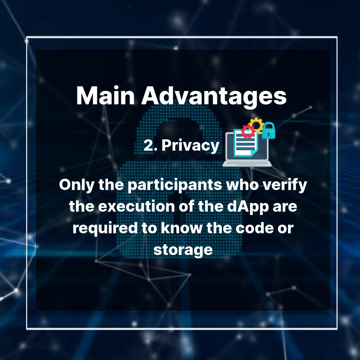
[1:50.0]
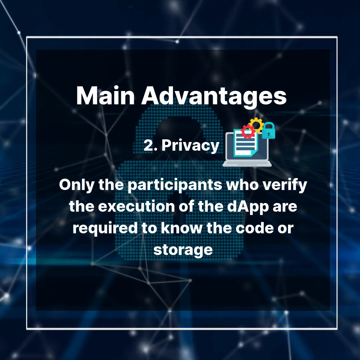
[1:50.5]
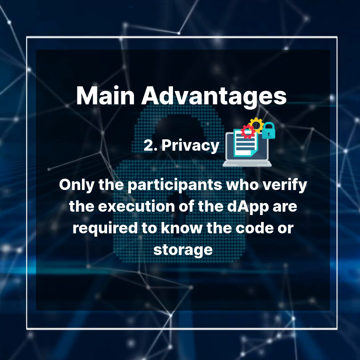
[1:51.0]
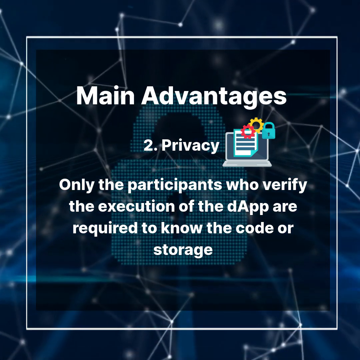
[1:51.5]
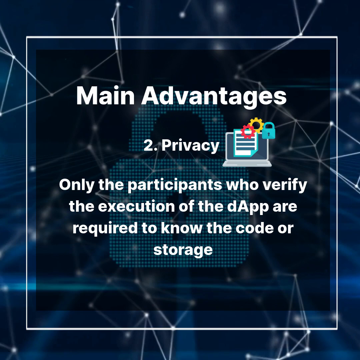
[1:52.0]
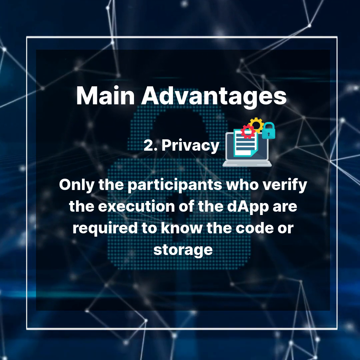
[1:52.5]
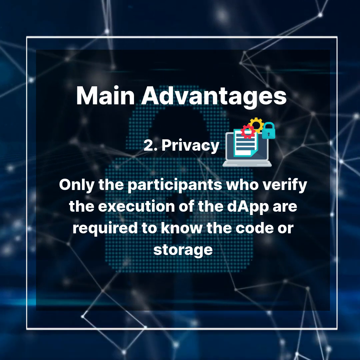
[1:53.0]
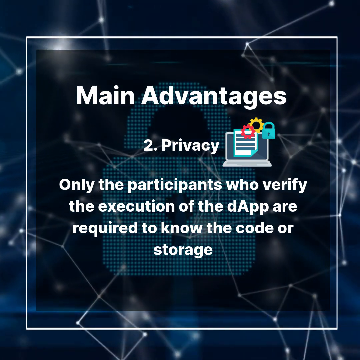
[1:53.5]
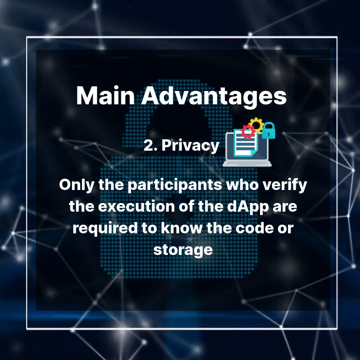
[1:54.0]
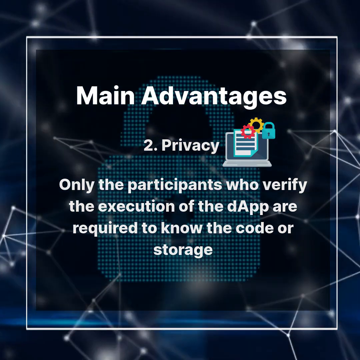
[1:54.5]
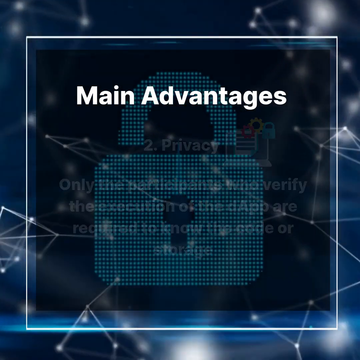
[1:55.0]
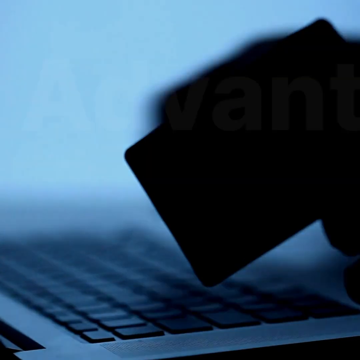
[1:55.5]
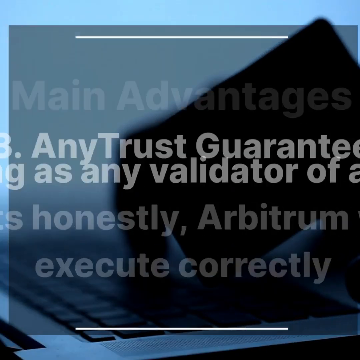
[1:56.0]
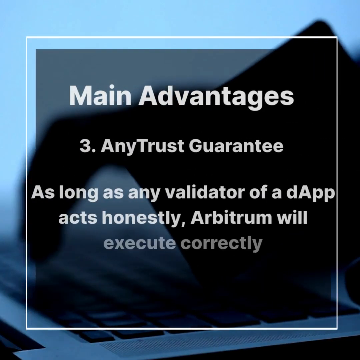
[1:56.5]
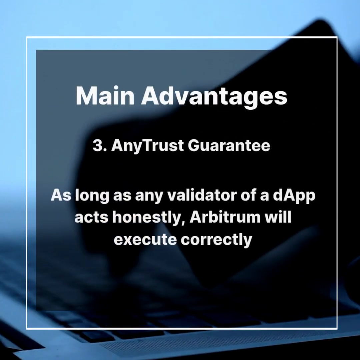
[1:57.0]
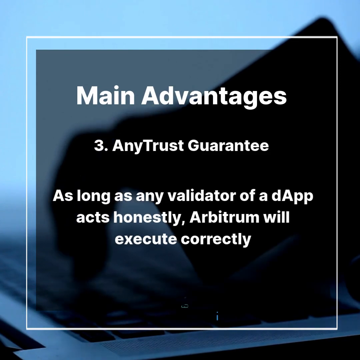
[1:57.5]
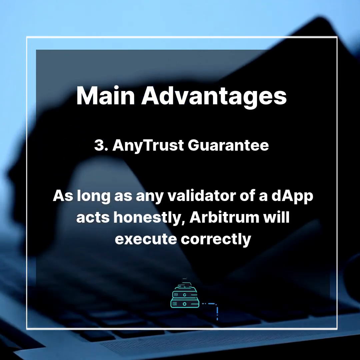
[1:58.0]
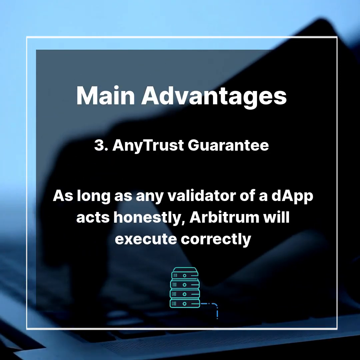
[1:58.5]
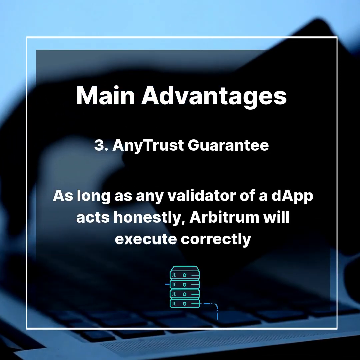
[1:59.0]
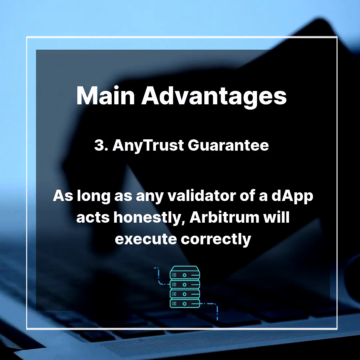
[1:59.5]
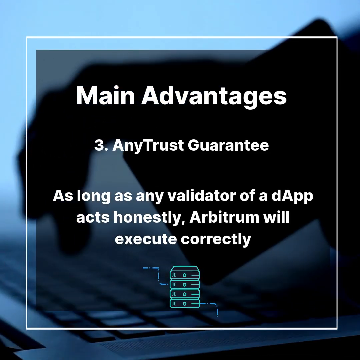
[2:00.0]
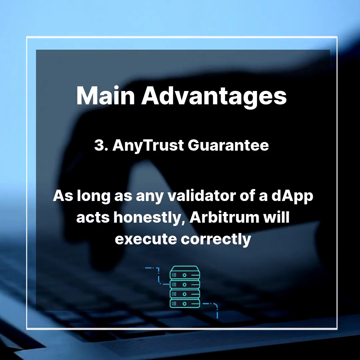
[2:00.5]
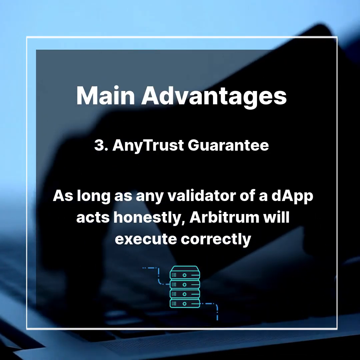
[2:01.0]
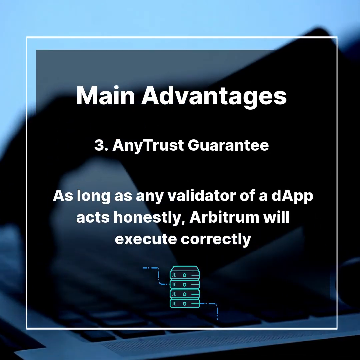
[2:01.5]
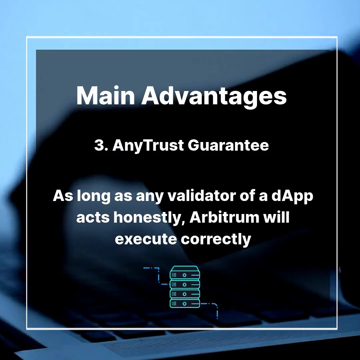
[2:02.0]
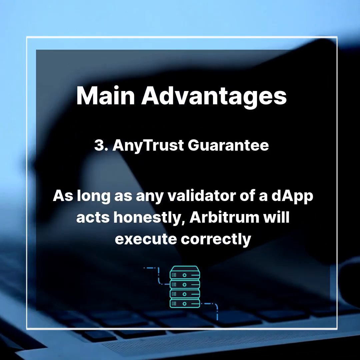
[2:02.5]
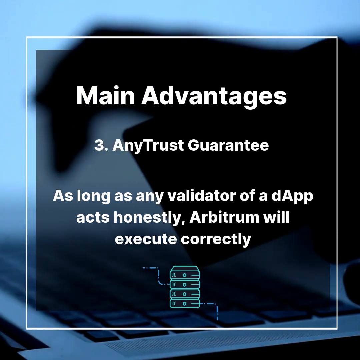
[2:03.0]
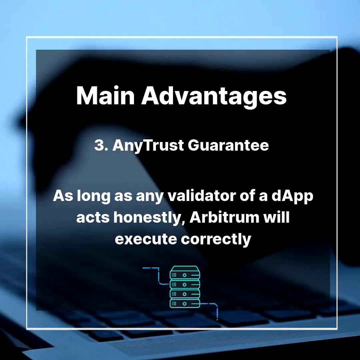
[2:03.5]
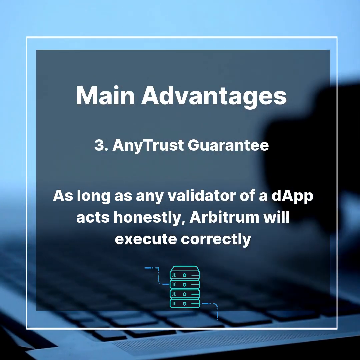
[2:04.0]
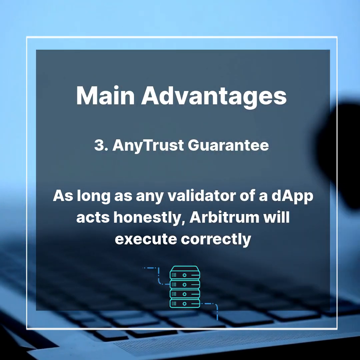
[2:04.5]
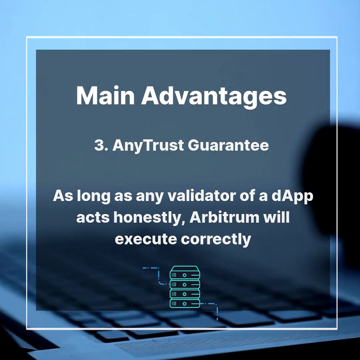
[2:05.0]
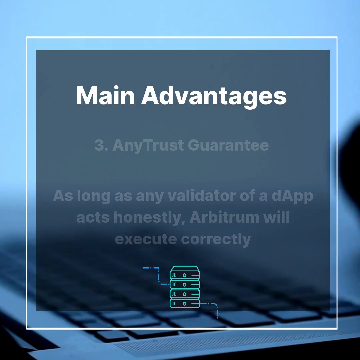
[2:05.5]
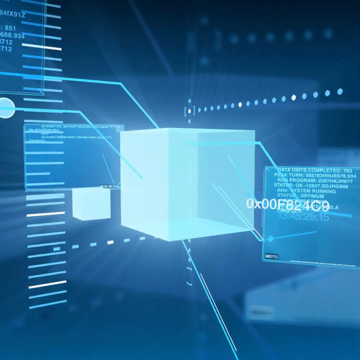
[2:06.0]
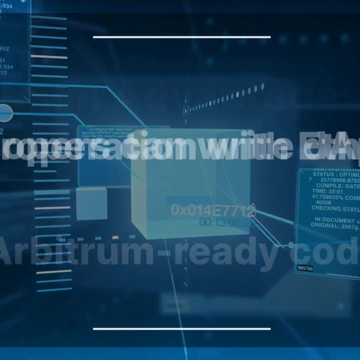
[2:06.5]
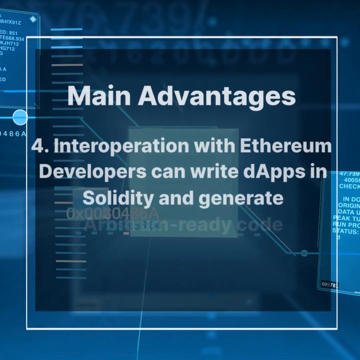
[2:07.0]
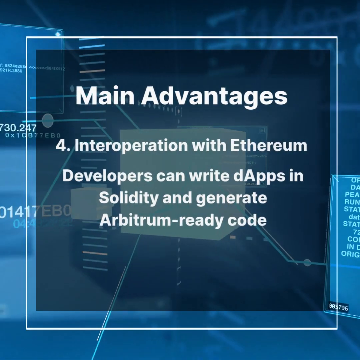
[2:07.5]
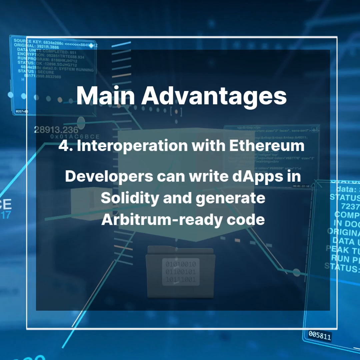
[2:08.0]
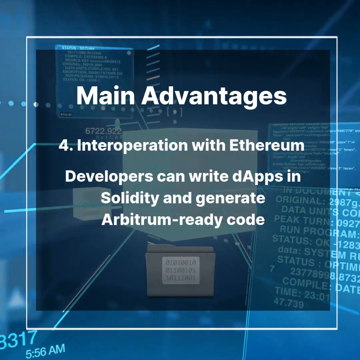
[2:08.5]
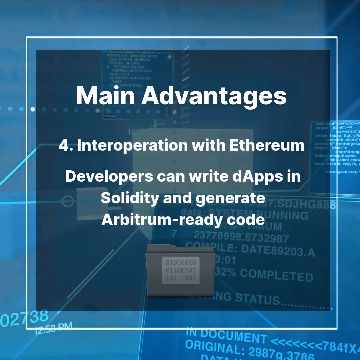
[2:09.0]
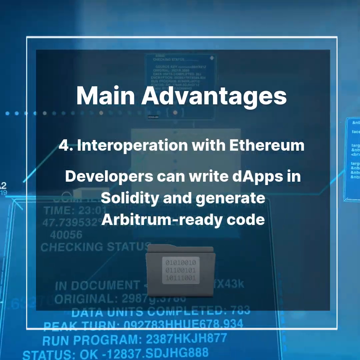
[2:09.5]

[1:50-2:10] A big lock is on the screen with the text "main advantages 2 privacy", and a laptop image with a lock on it. The text reads "only the participants who verify the execution of the dapp are required to know the code or storage." Grid lines fill the background. Next, "main advantages" appears while someone types on a computer or laptop in the background, with the text "3 any trust guarantee: as long as any validator of a dapp acts honestly, Arbitrum will execute correctly." A small image of computer servers is at the bottom. Then the text reads "main advantages 4 interoperation with Ethereum" and says developers can write dapps and generate Arbitrum-ready code. A folder image is at the bottom.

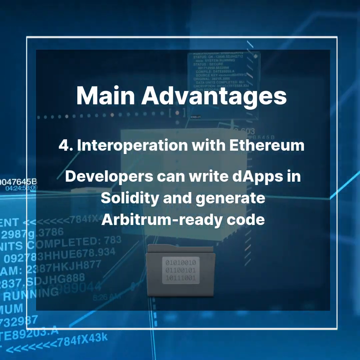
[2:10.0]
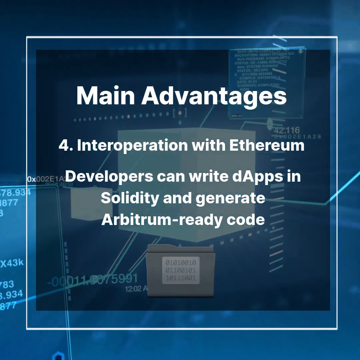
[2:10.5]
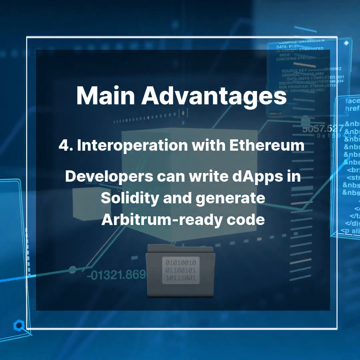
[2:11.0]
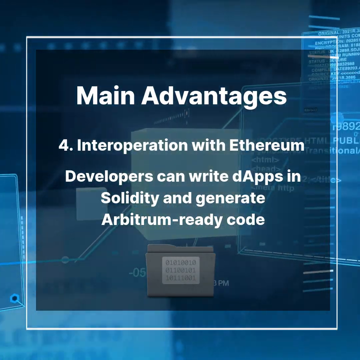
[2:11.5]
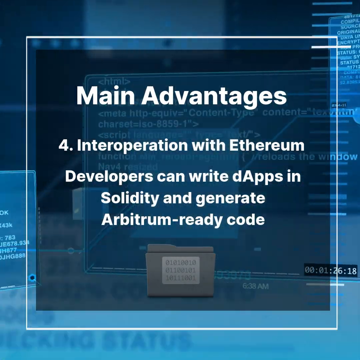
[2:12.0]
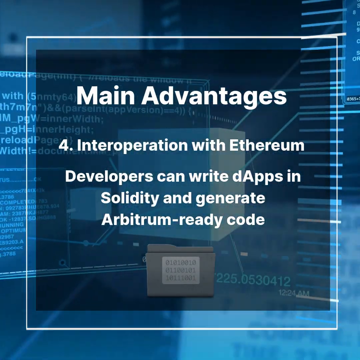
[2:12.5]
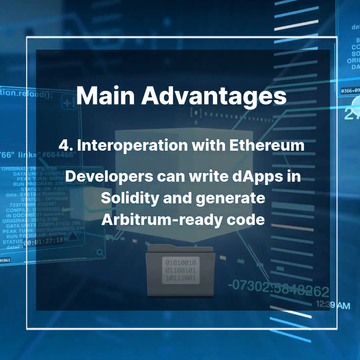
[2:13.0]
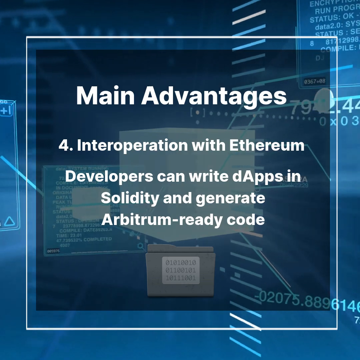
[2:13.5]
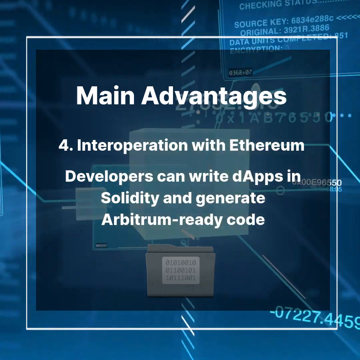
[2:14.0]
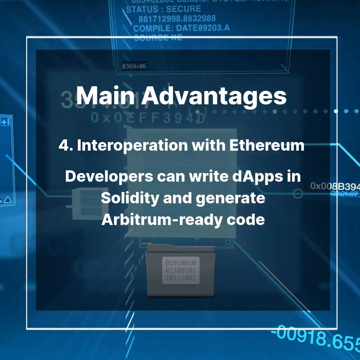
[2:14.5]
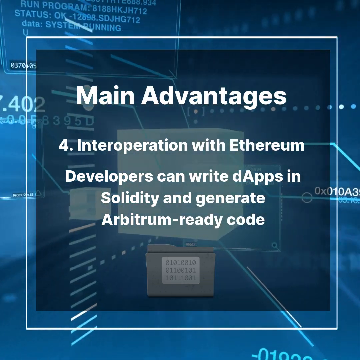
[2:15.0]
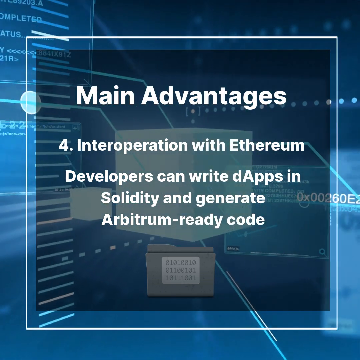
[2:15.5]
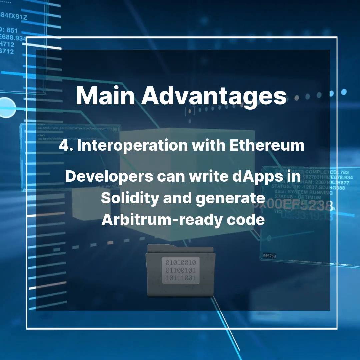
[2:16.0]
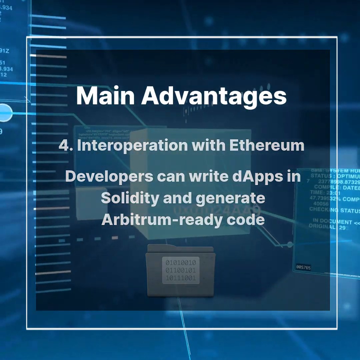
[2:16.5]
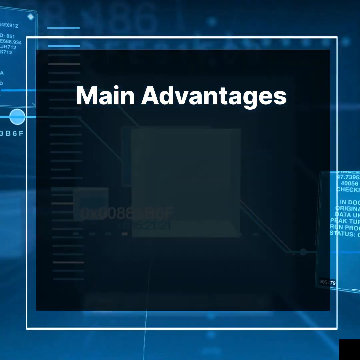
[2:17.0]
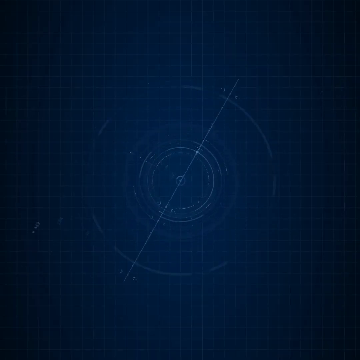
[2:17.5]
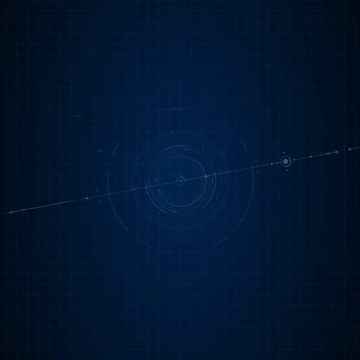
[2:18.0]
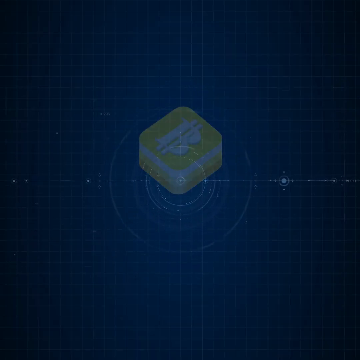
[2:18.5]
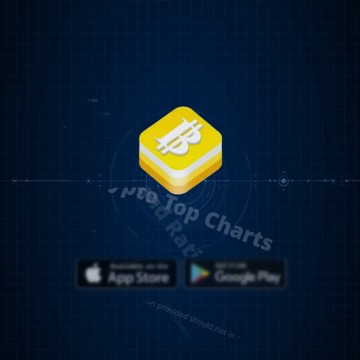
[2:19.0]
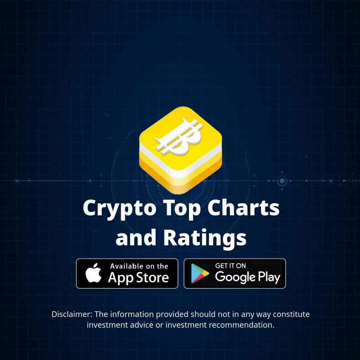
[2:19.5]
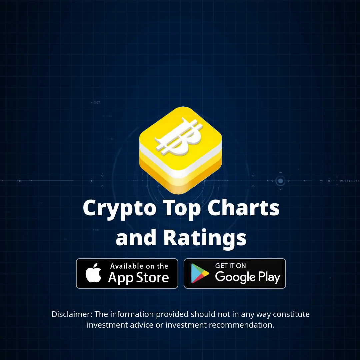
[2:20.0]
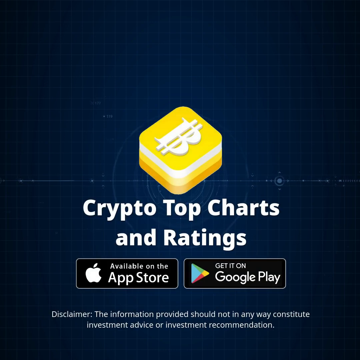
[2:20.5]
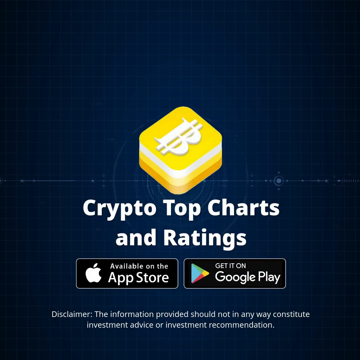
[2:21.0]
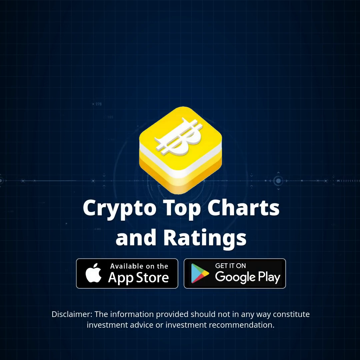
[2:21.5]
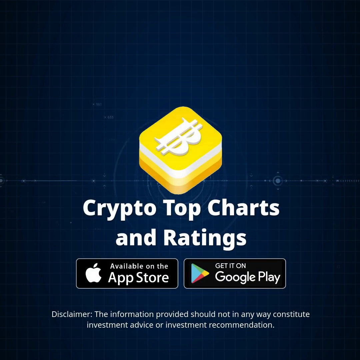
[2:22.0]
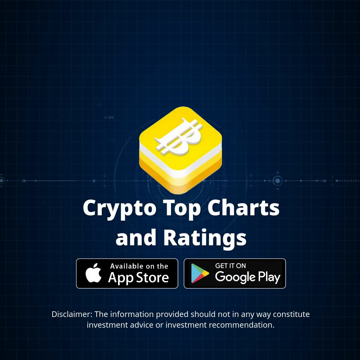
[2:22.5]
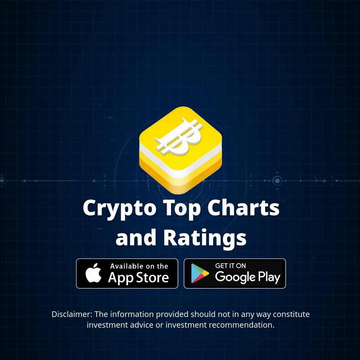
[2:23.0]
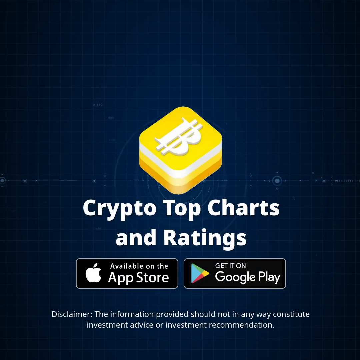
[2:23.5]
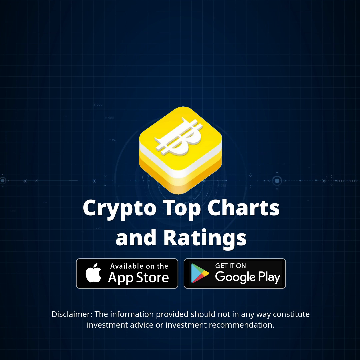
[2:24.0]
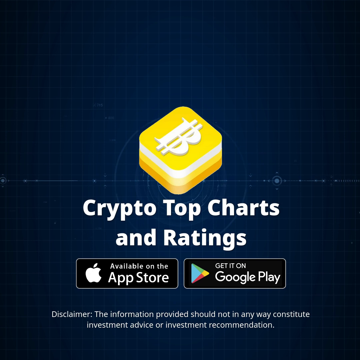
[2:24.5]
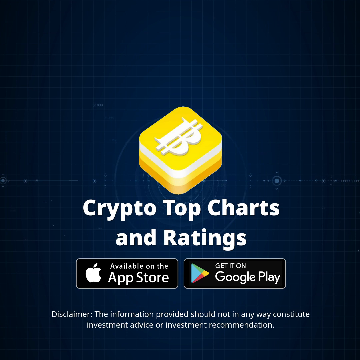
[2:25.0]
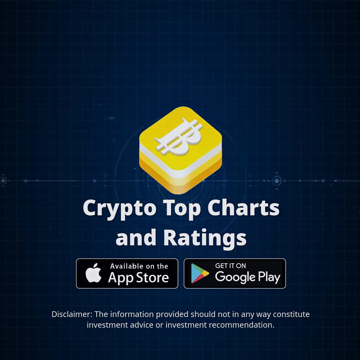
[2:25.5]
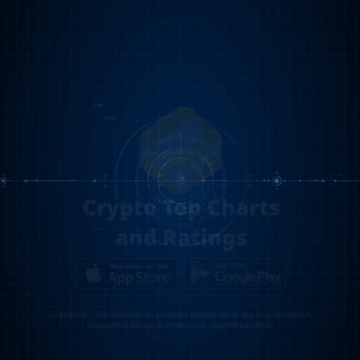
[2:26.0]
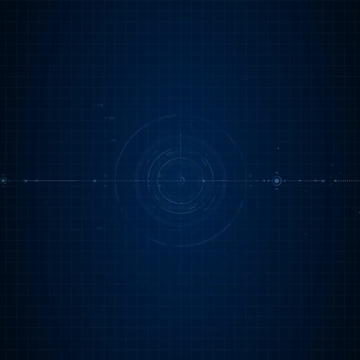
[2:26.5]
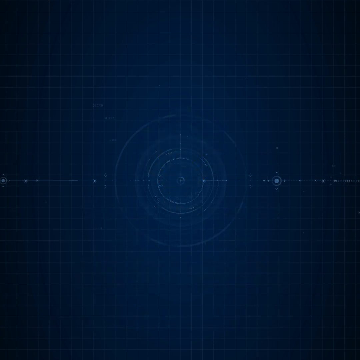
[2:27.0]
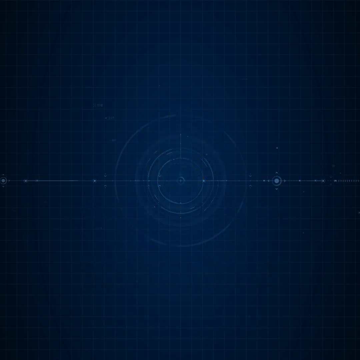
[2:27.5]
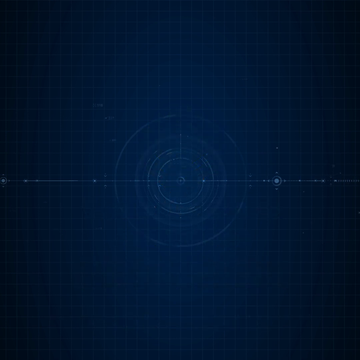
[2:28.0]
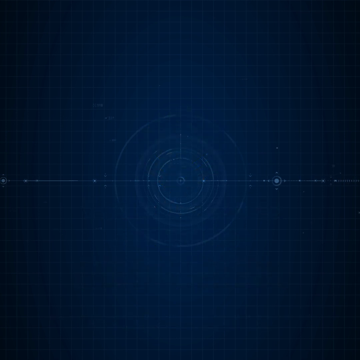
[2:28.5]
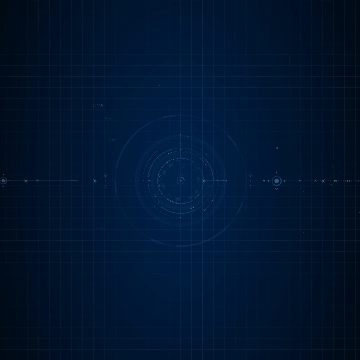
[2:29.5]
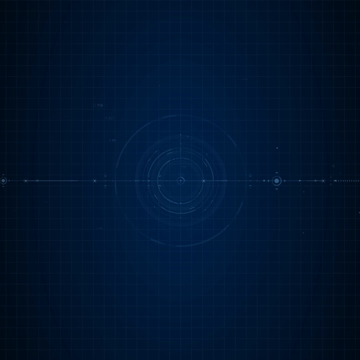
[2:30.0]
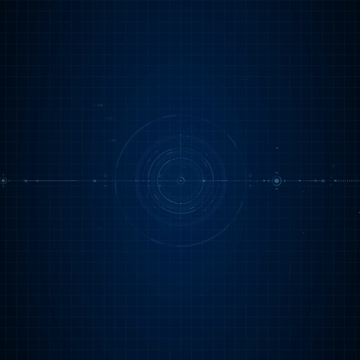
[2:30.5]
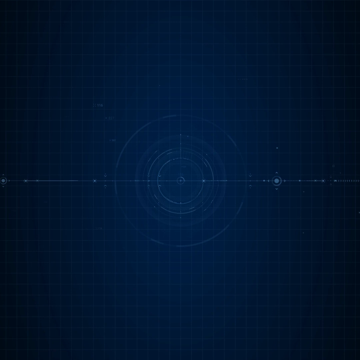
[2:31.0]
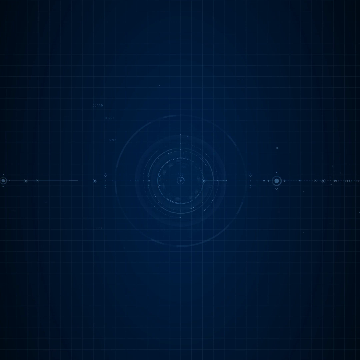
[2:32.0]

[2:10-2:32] A glowing blue square in the background carries the text "main advantages 4 interoperation with Ethereum", saying developers can write dapps and generate Arbitrum-ready code. A small envelope image is at the bottom. Blue items such as documents and code spin around in the background. The video then moves to something Bitcoin-related with the text "crypto top charts and ratings".